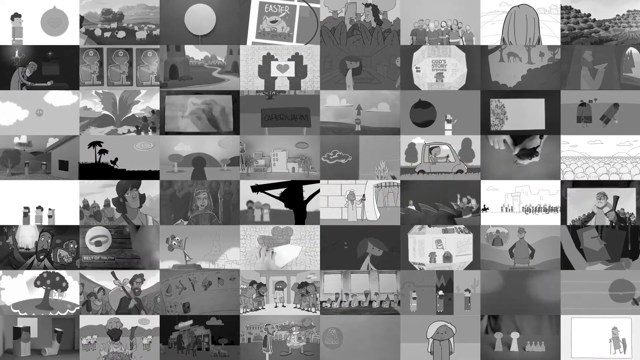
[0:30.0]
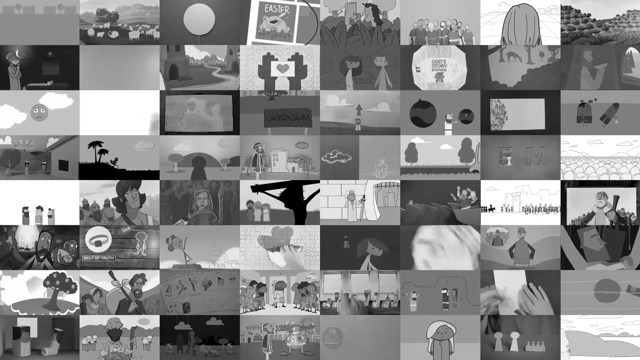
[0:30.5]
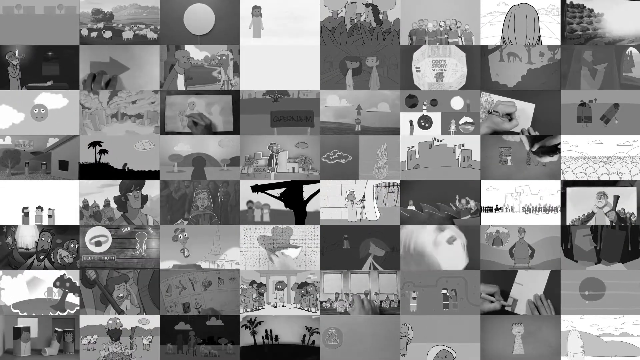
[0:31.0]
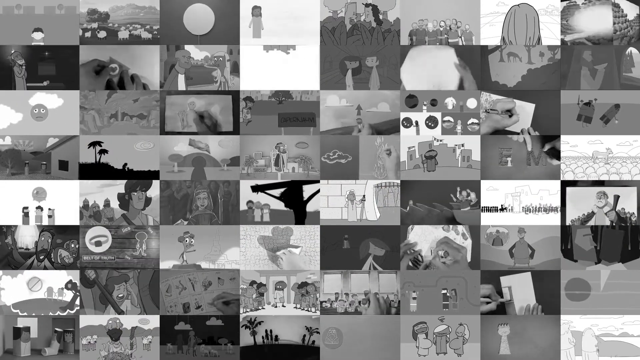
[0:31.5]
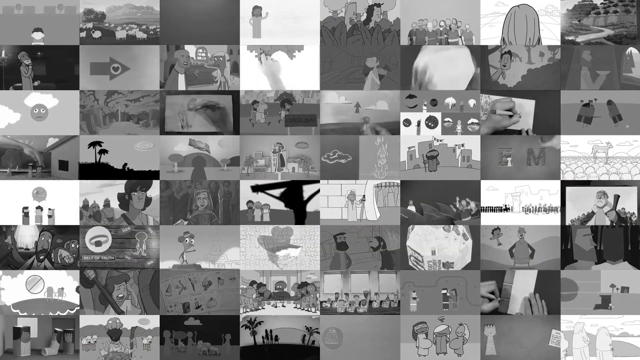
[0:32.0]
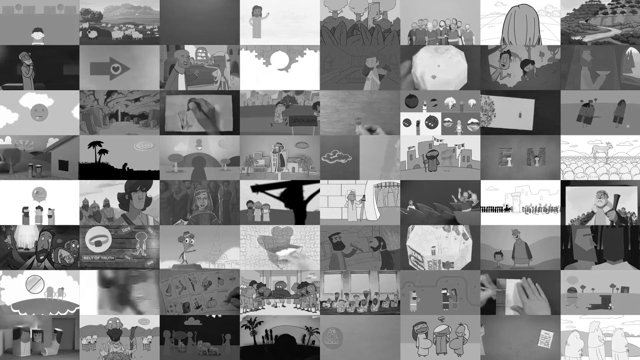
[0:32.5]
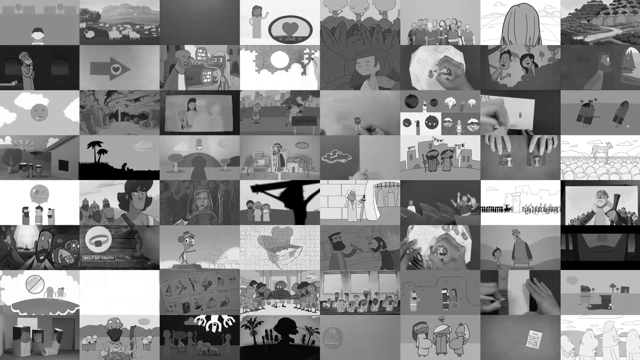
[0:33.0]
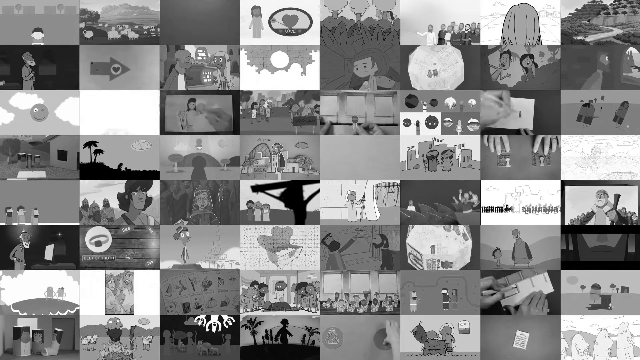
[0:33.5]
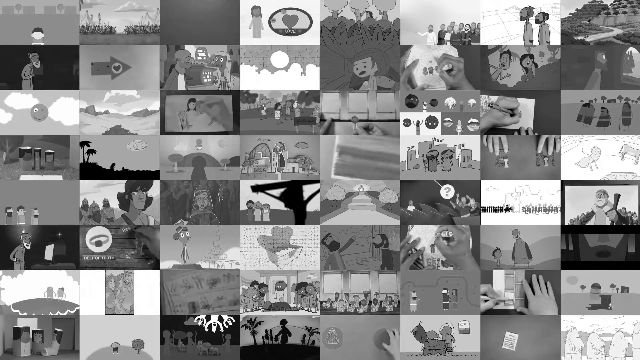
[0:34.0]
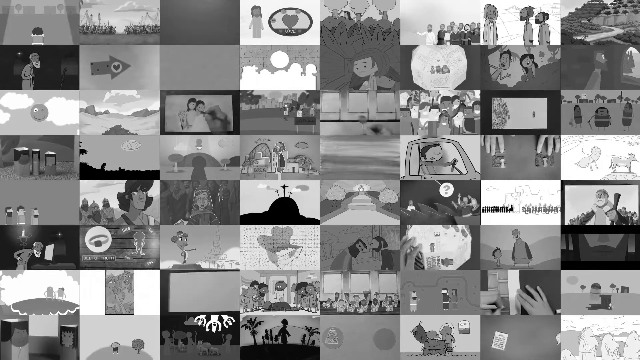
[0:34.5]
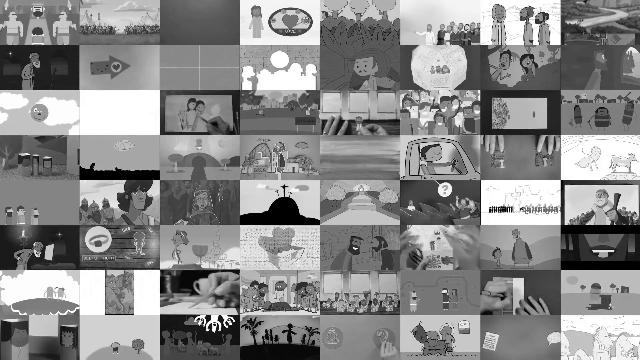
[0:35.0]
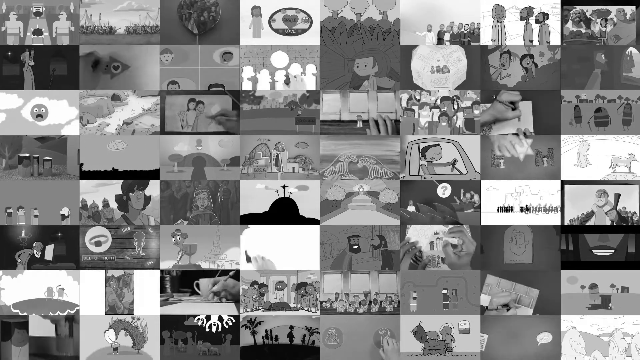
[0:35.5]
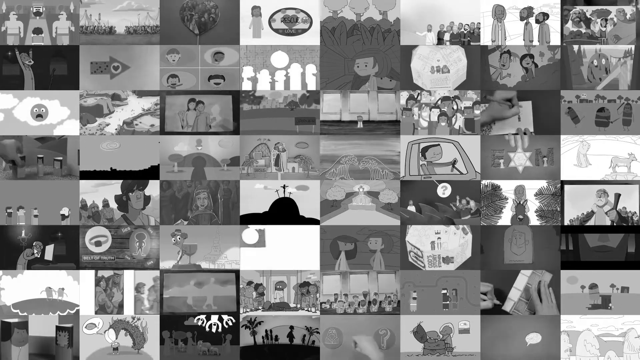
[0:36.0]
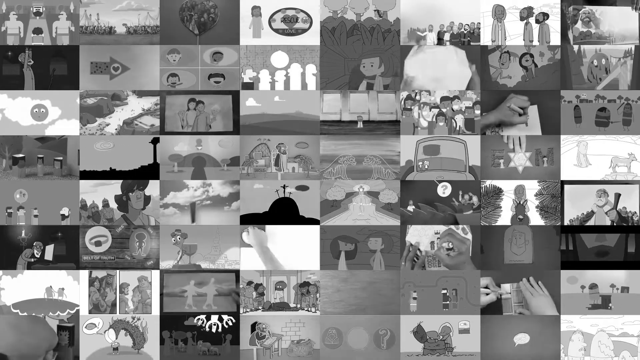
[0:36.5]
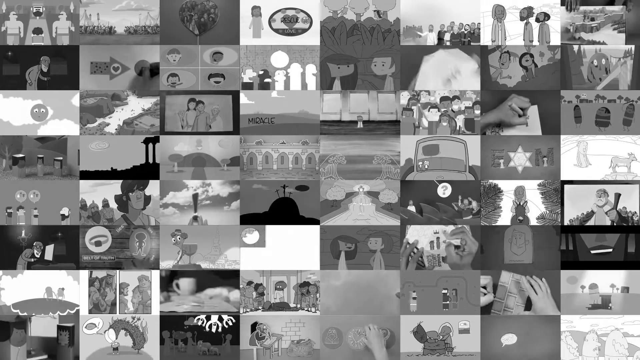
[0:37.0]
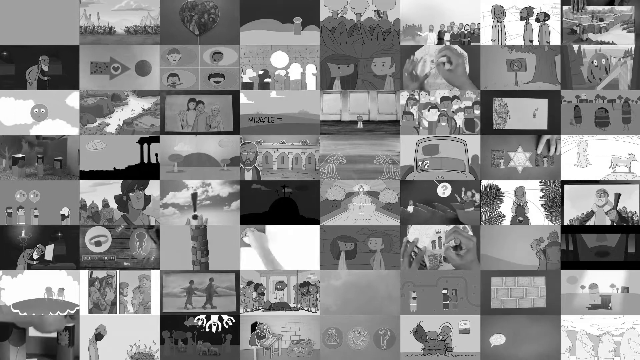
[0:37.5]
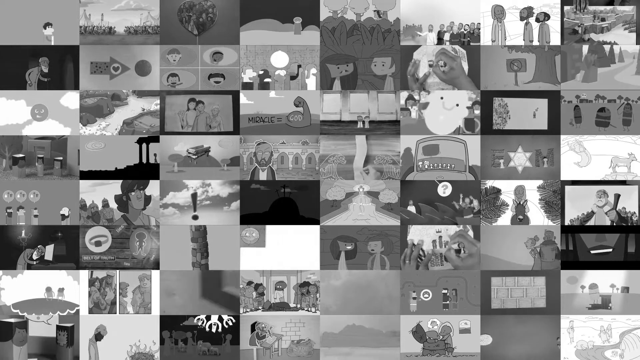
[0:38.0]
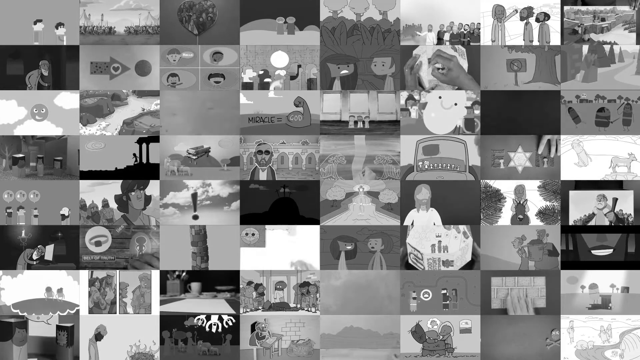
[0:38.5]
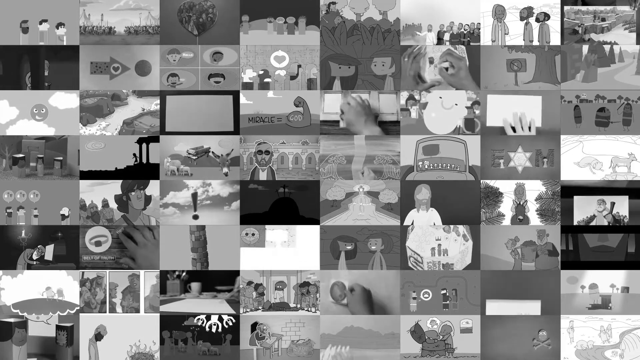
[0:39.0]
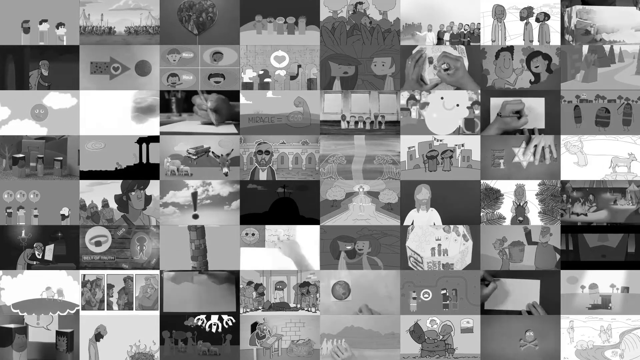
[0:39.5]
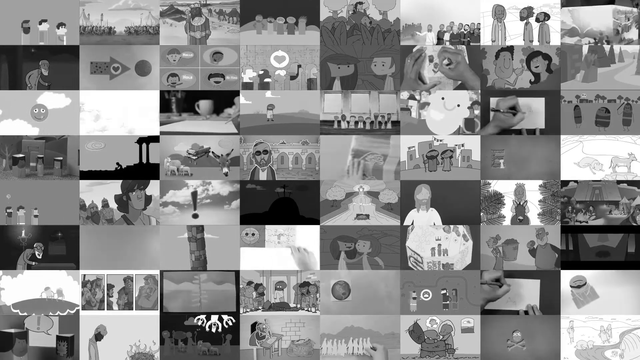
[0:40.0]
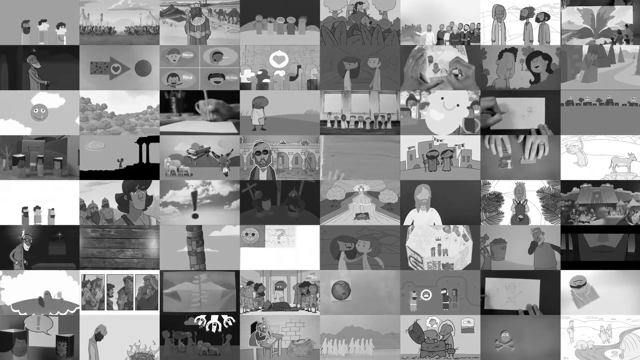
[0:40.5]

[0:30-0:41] The background image, which looks like a large collage with several images in it, is shown. Some of the images are illustrated and moving, like tiny movie scenes playing in some of the collage pictures on the back of this ending screen. They range from hands writing to people moving around. The images are very small, so it is hard to see exactly what is going on, but several different videos depict several different scenes. Some seem to be stories from the Bible, maybe, while others look like they could be more modern-day stories because people are driving vehicles.